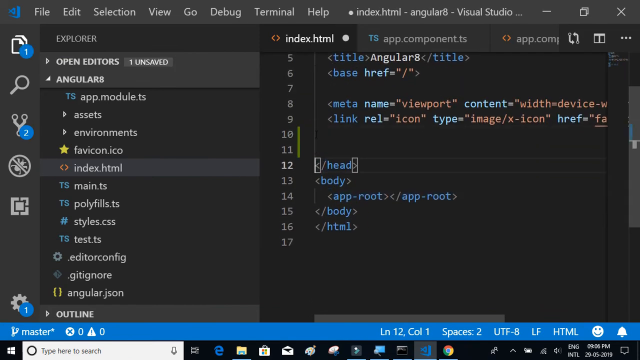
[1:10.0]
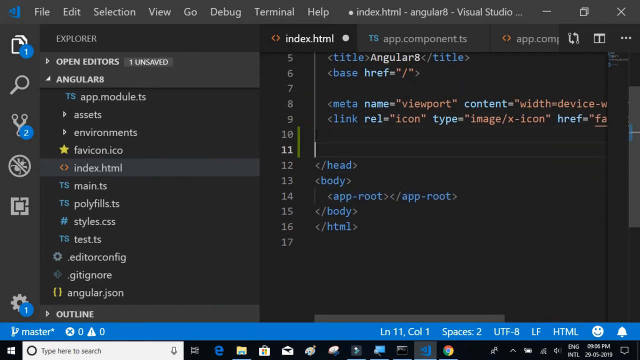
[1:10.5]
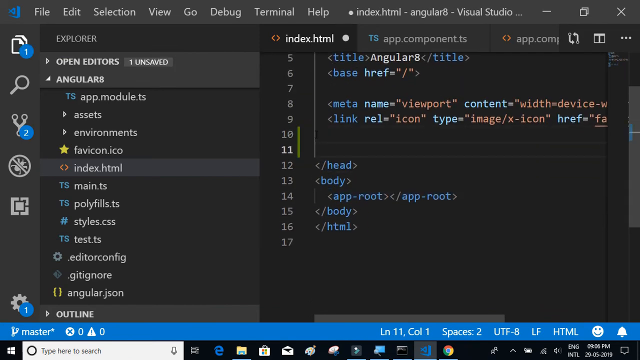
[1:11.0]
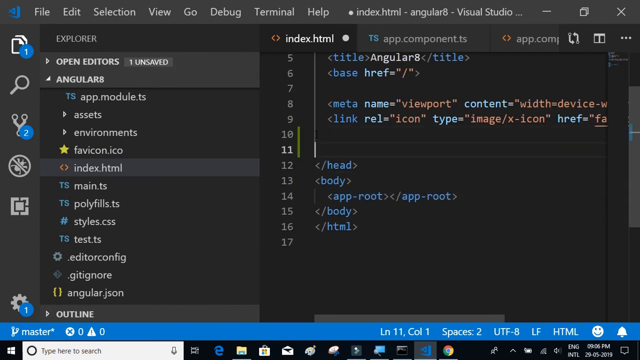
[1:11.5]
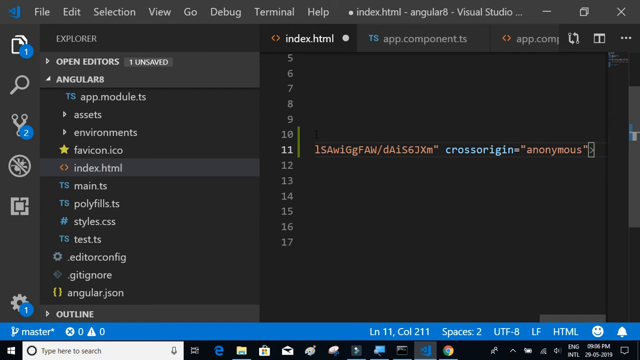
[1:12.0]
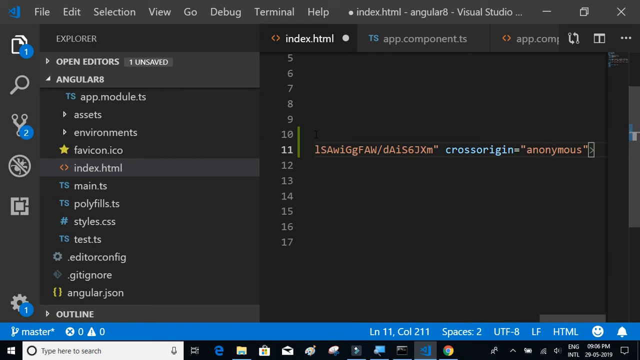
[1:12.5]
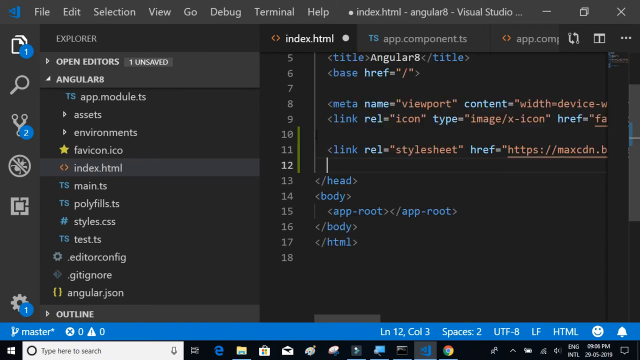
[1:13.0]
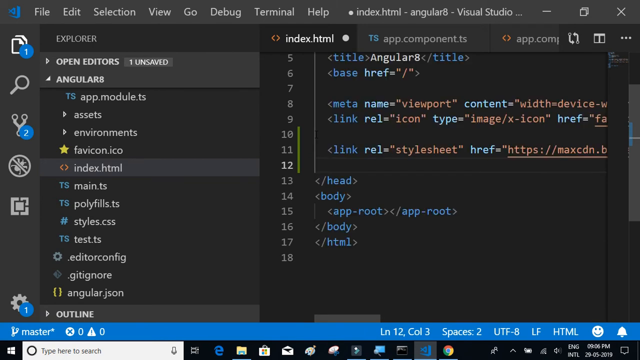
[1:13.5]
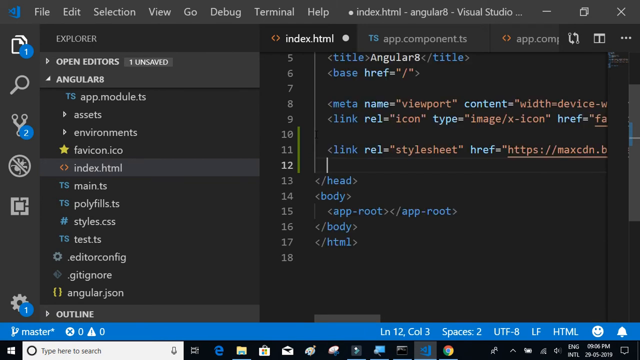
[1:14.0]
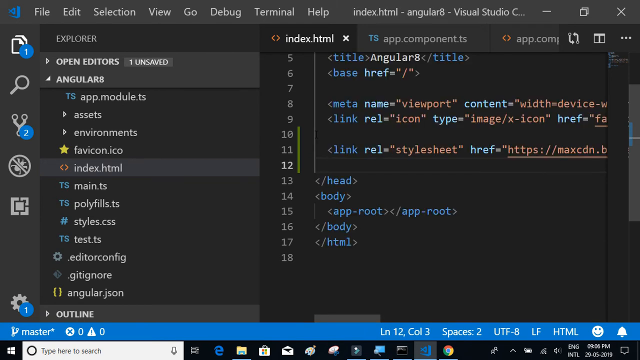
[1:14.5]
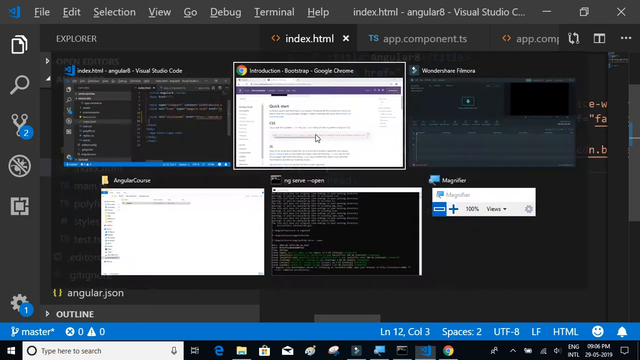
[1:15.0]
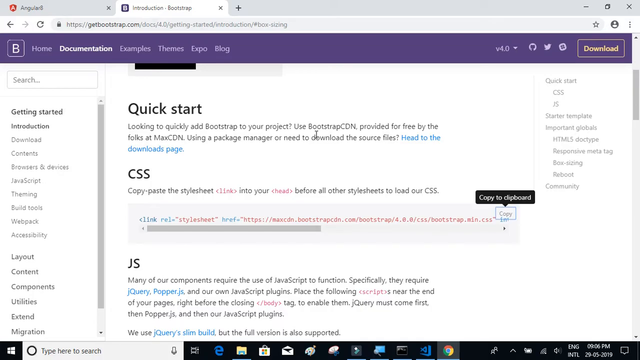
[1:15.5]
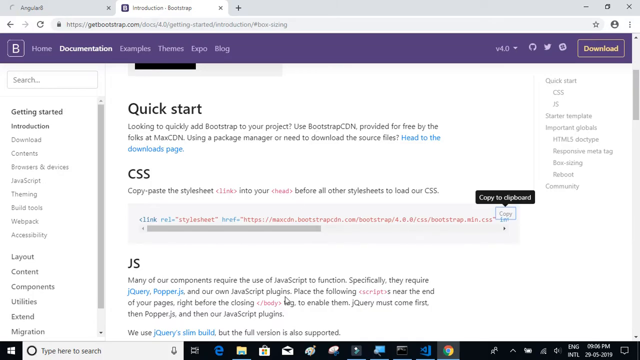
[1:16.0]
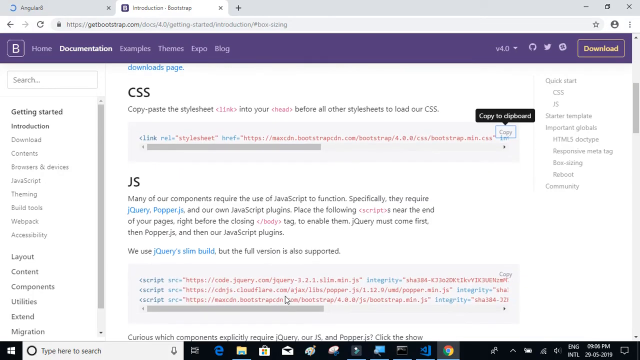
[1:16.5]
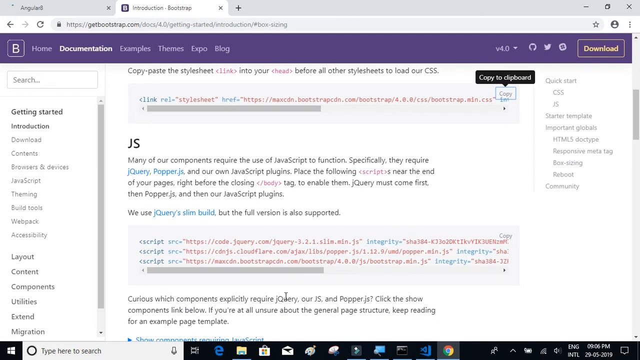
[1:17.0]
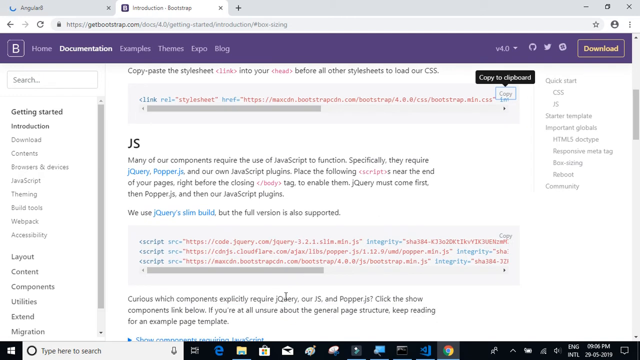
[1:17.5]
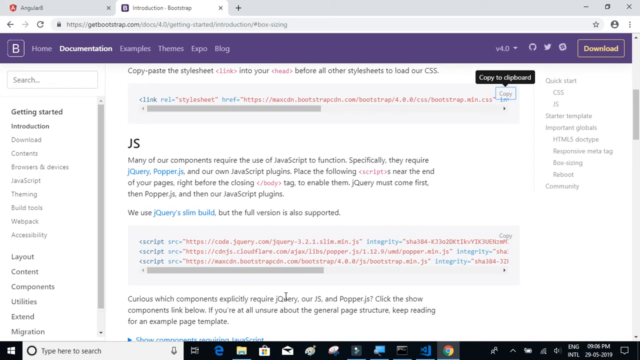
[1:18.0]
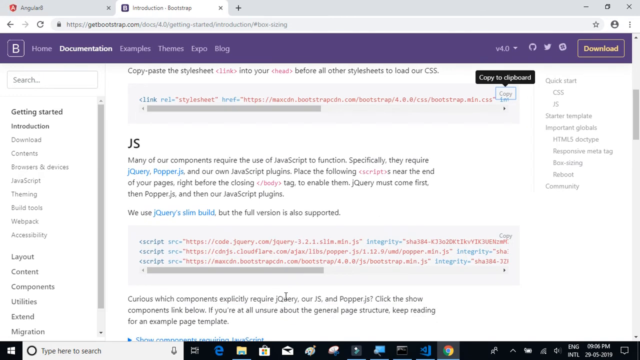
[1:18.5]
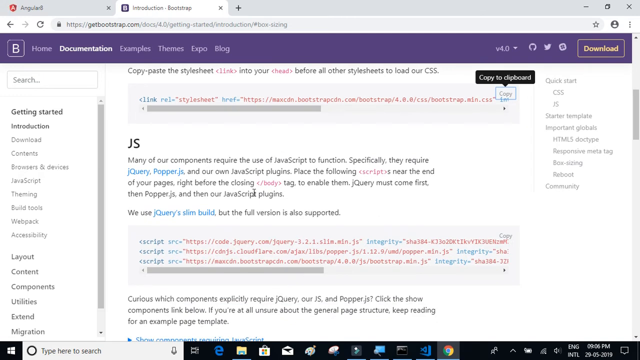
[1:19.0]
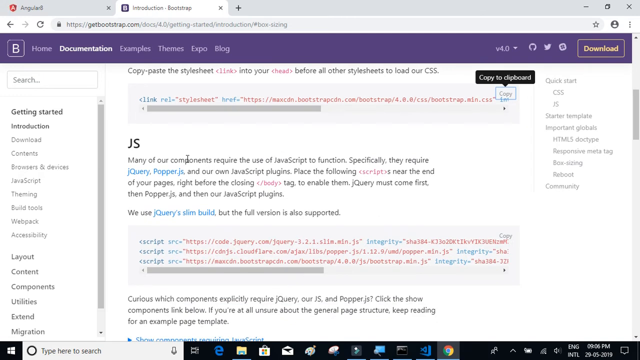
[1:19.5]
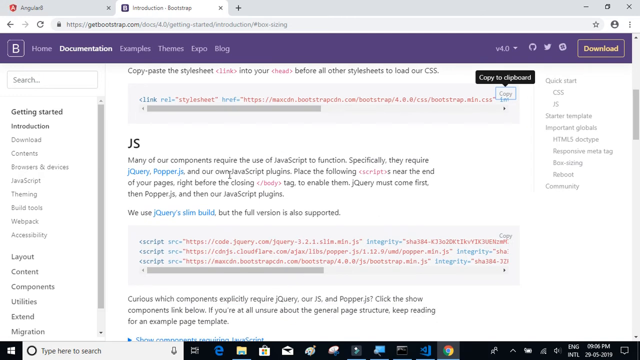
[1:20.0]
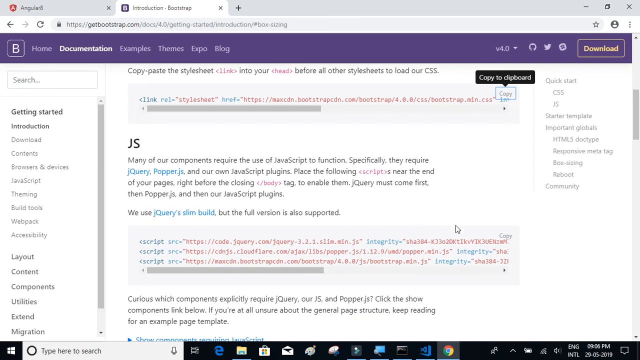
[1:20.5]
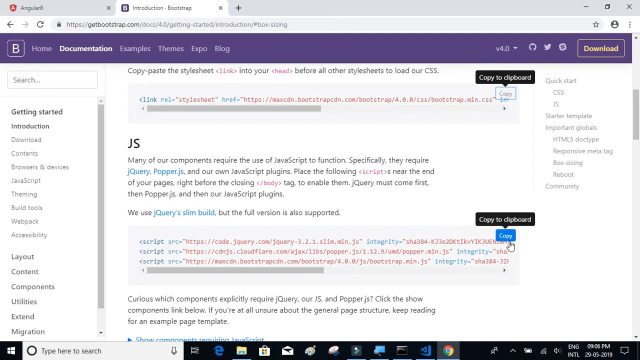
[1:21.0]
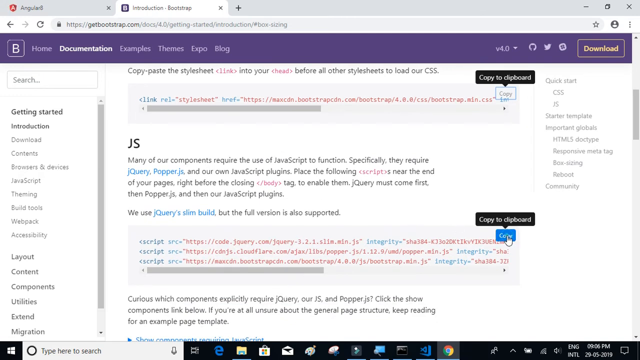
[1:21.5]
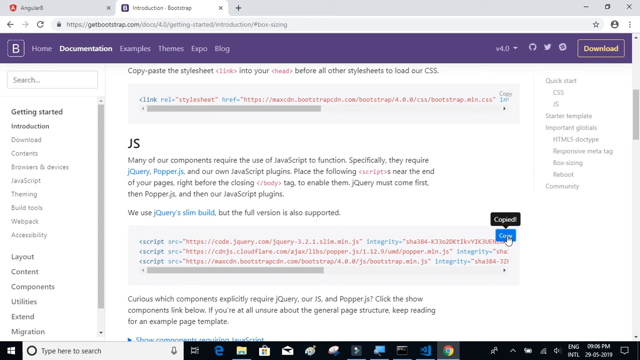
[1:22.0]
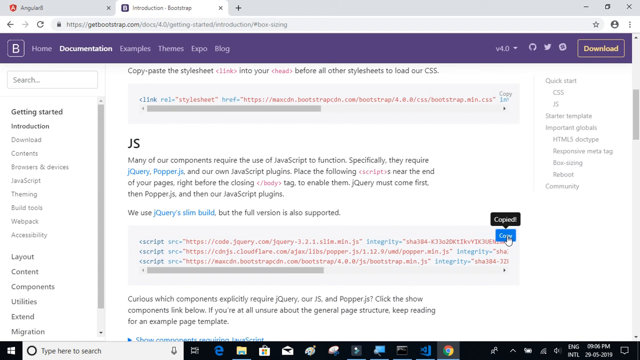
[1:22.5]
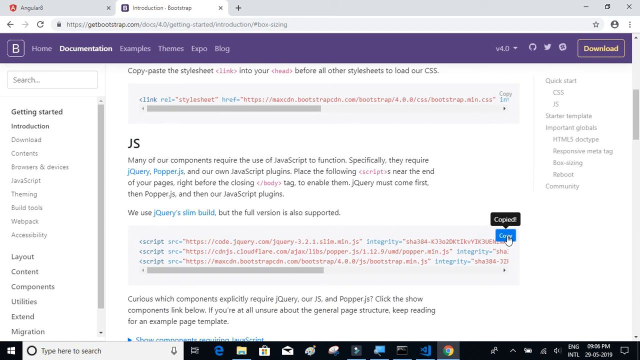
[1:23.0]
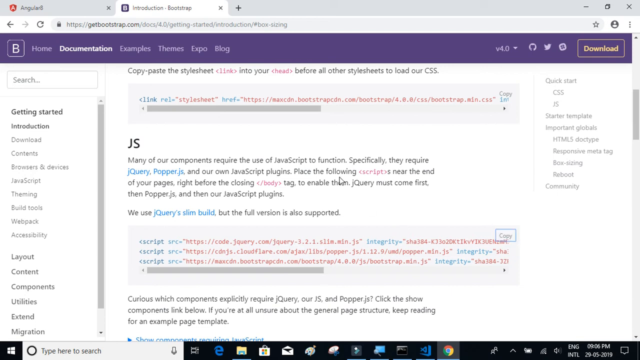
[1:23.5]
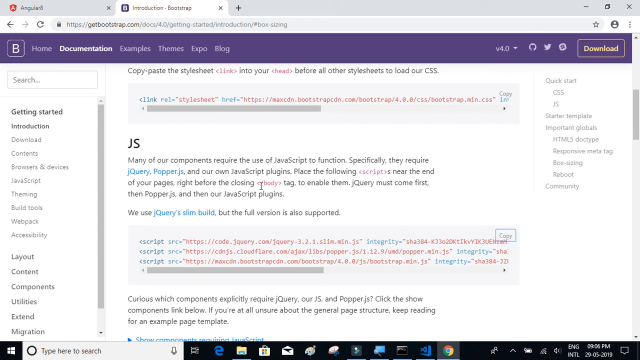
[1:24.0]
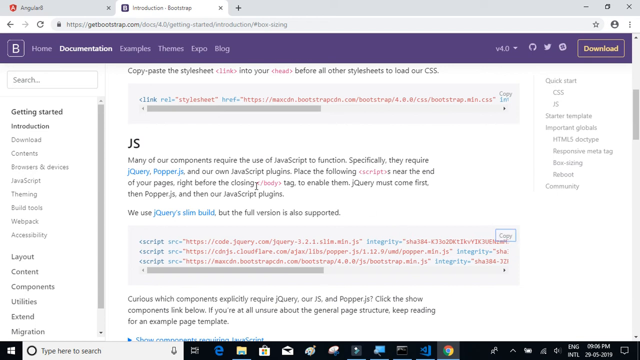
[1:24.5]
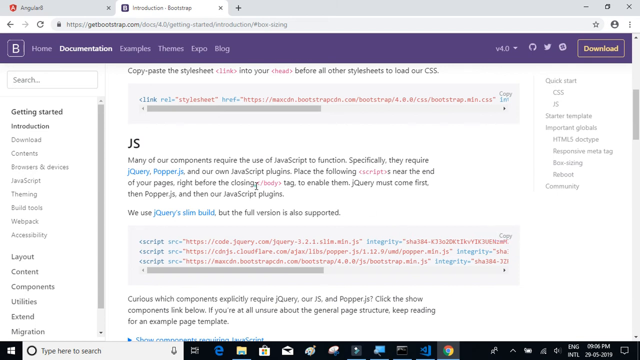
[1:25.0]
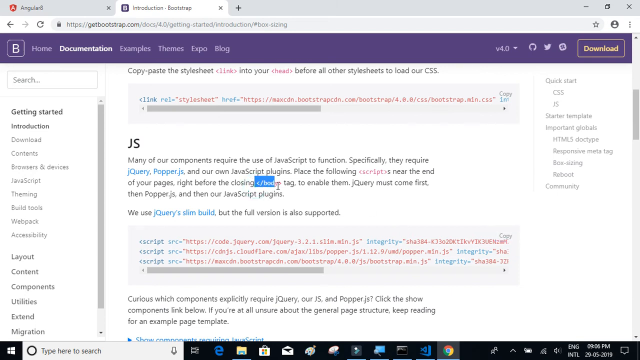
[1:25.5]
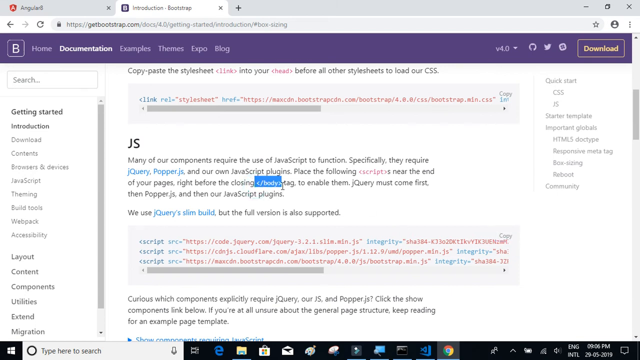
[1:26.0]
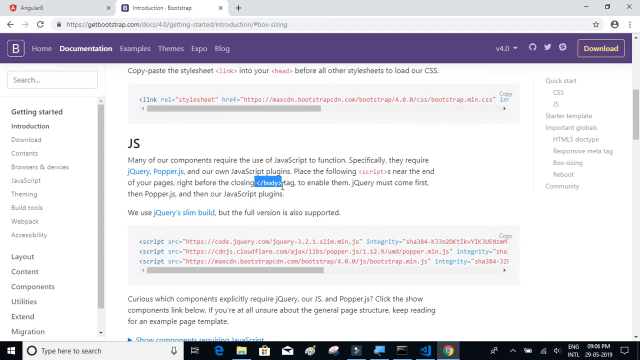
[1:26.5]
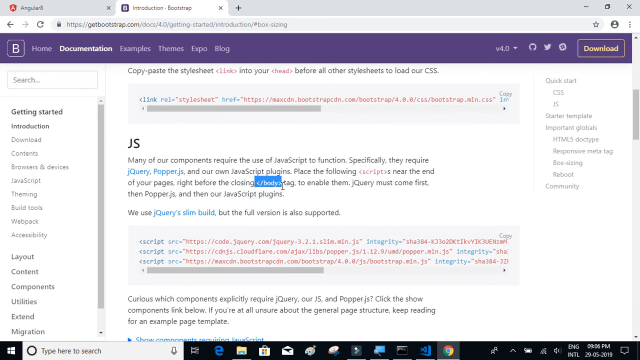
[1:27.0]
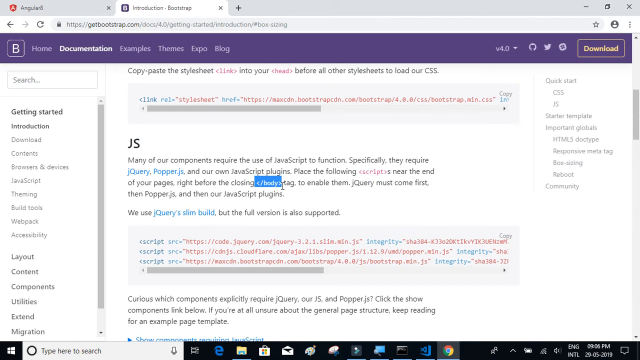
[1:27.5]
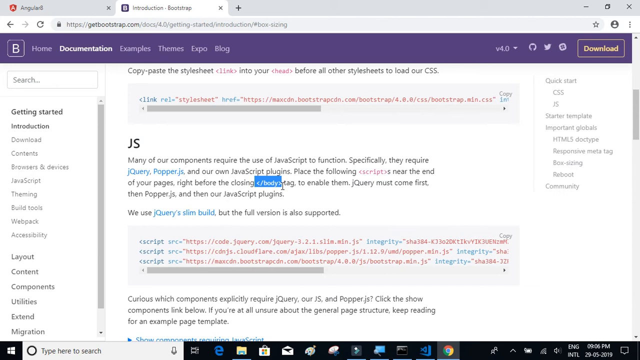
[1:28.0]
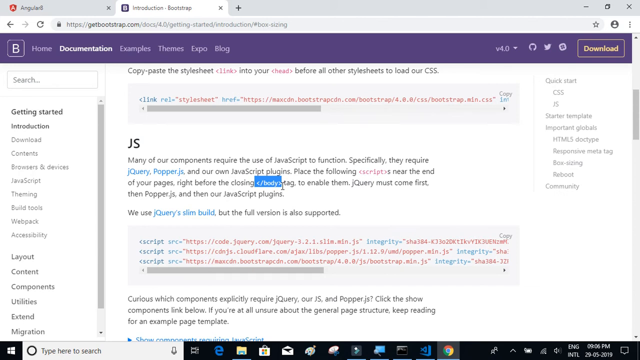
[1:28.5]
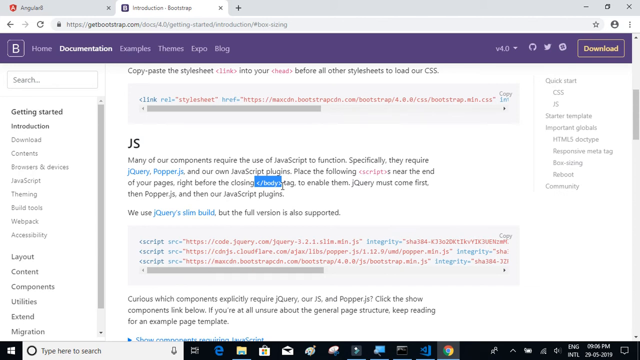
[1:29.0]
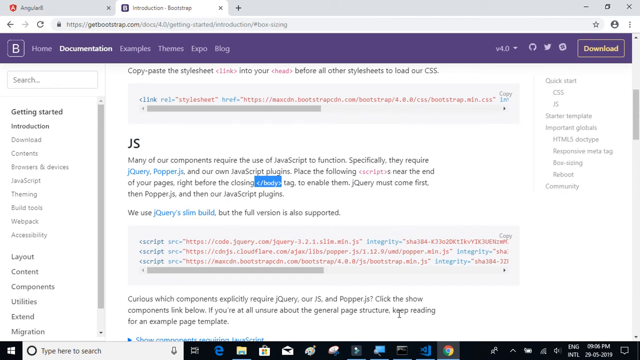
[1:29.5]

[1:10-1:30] A computer screen shows a coding page. On the left is something like a menu that says "Explorer", and a file called "index.html" is open. The user quickly puts different words onto the screen on the right as the cursor moves, then adds a very long set of letters and numbers ending in "cross origin anonymous". They are on line 12, with line numbers 4, 5, 6, 7, 8, 9, 10 running down to 18. They quickly go back to the other tab, "Introduction Bootstrap", from https://getbootstrap.com, which shows "docs 4.0". The user scrolls the page down to the JS section, clicks on an area, copies a few words, then moves back to their page and inserts them there.